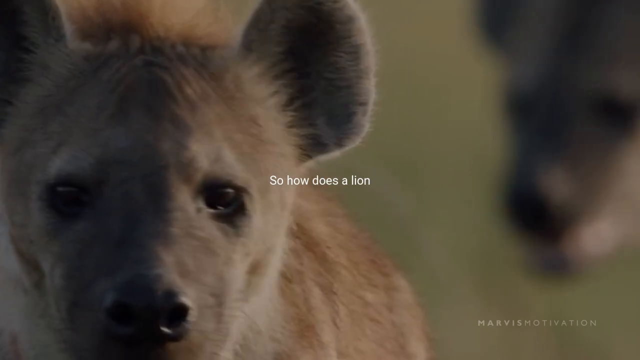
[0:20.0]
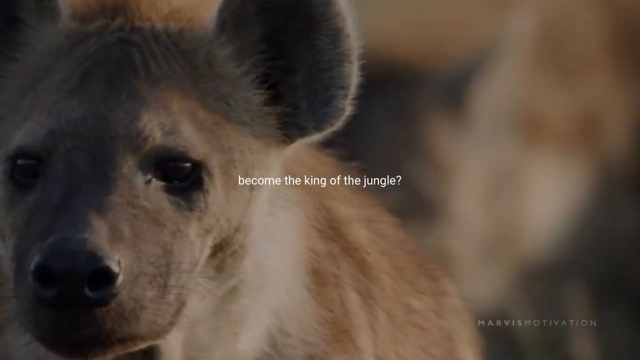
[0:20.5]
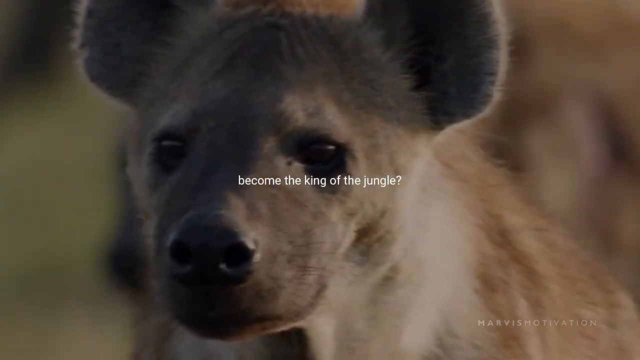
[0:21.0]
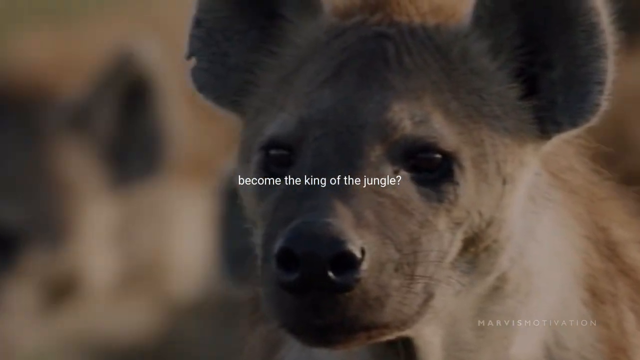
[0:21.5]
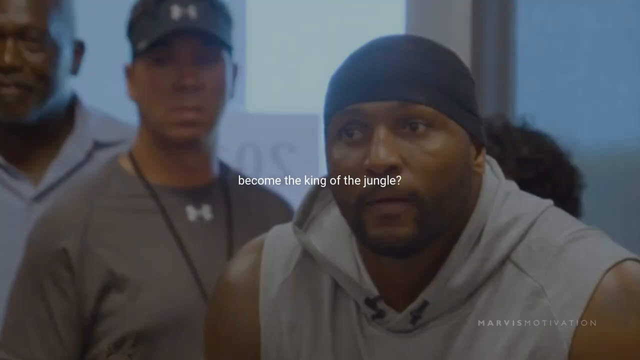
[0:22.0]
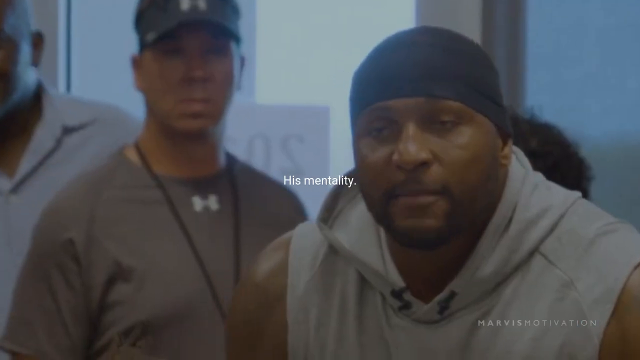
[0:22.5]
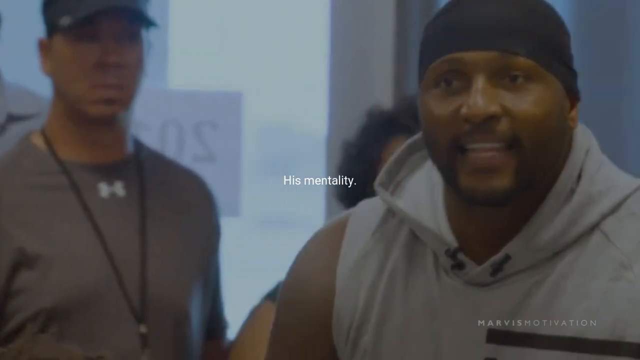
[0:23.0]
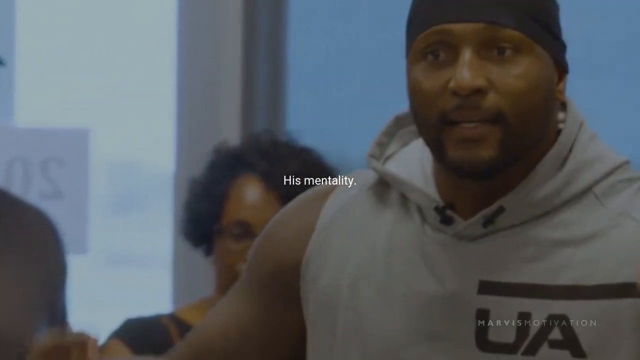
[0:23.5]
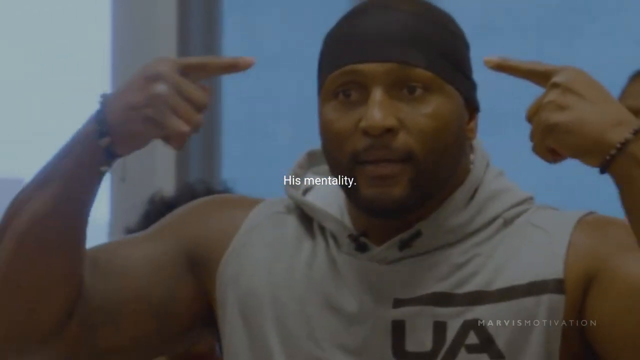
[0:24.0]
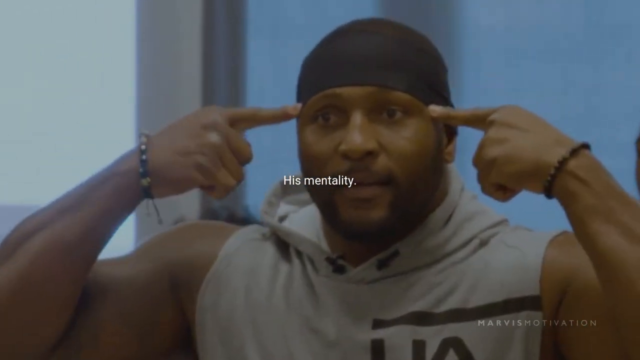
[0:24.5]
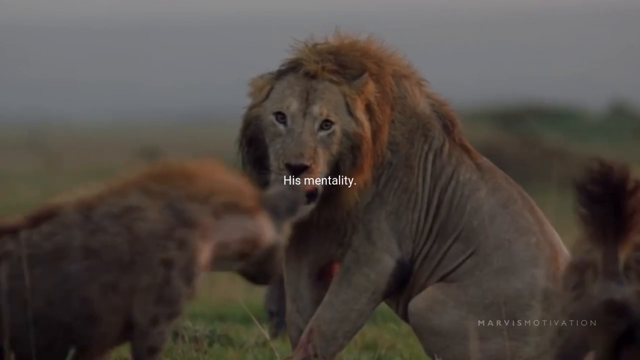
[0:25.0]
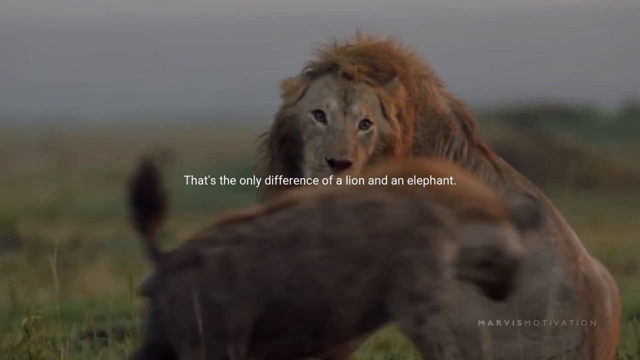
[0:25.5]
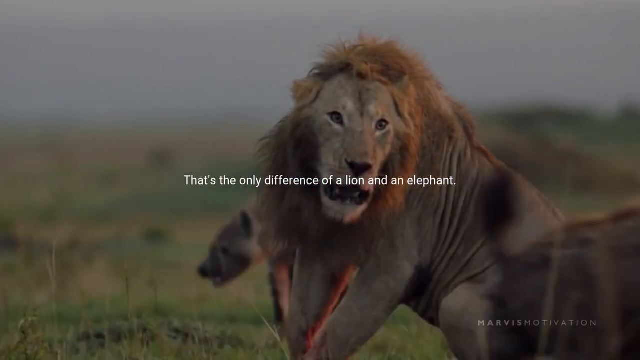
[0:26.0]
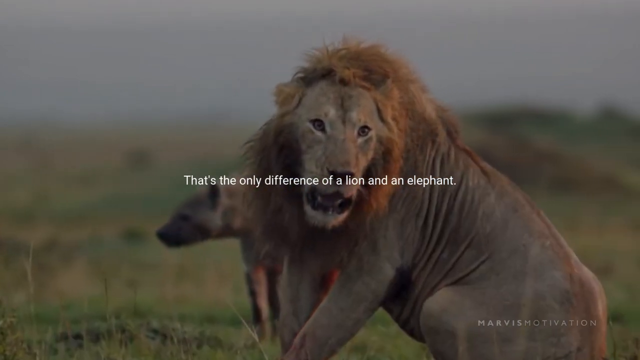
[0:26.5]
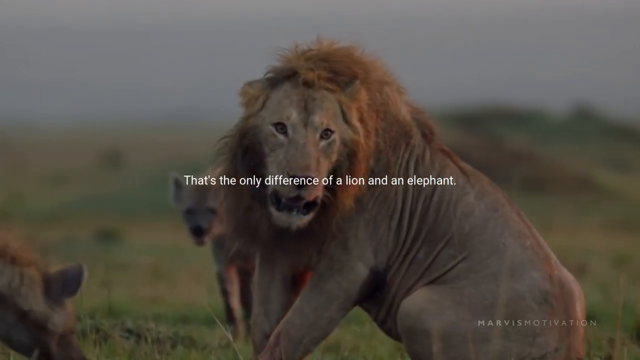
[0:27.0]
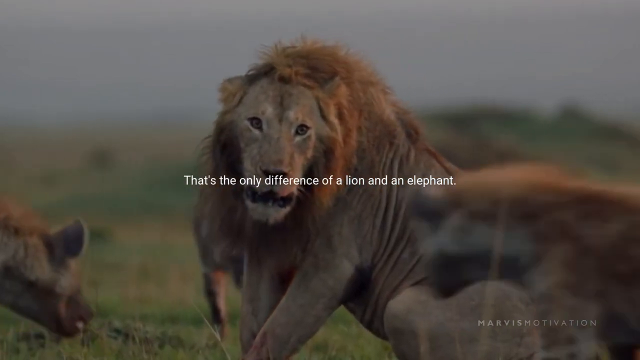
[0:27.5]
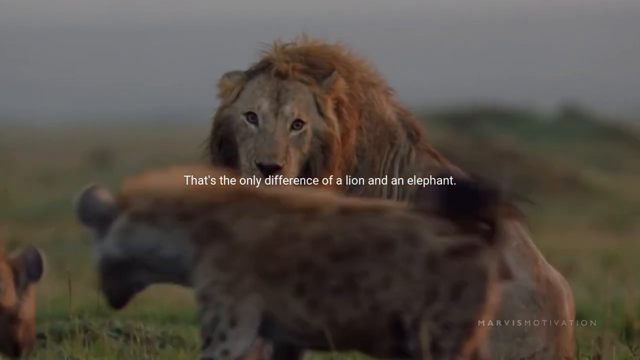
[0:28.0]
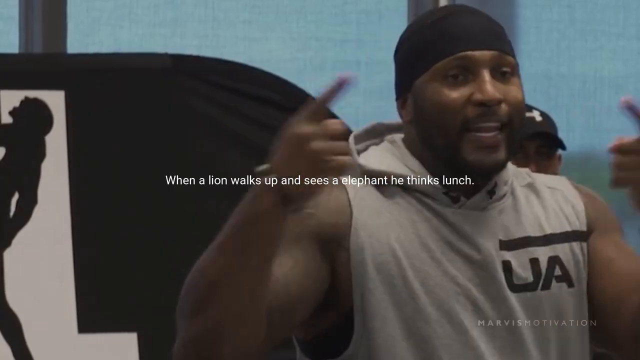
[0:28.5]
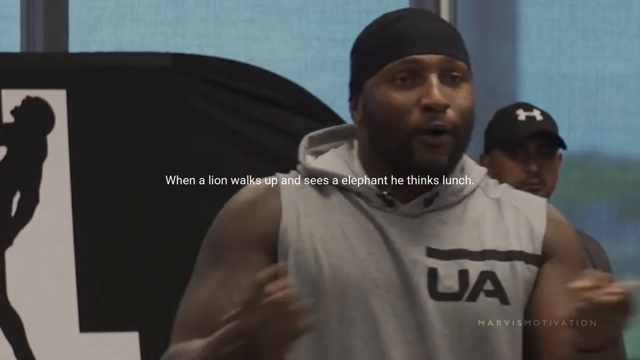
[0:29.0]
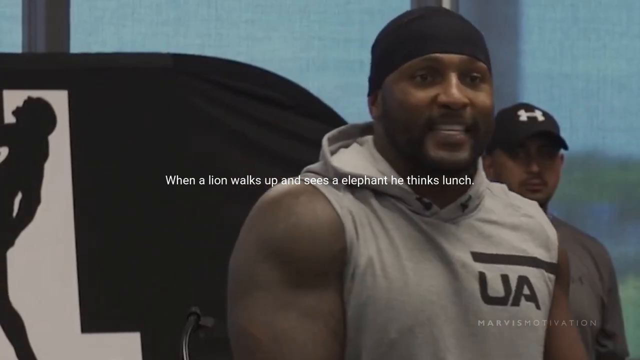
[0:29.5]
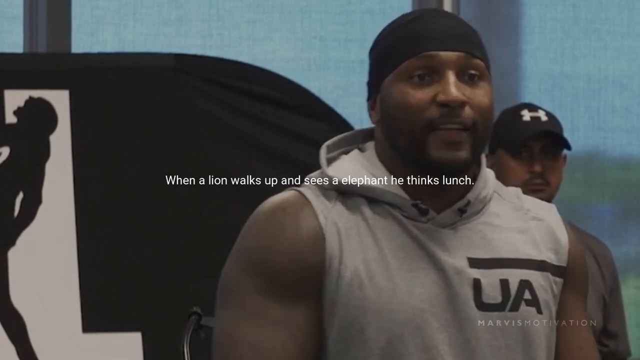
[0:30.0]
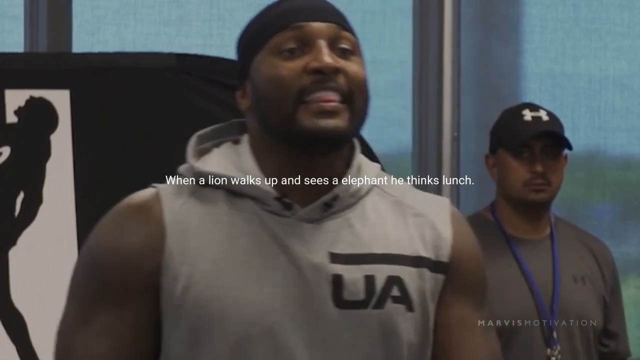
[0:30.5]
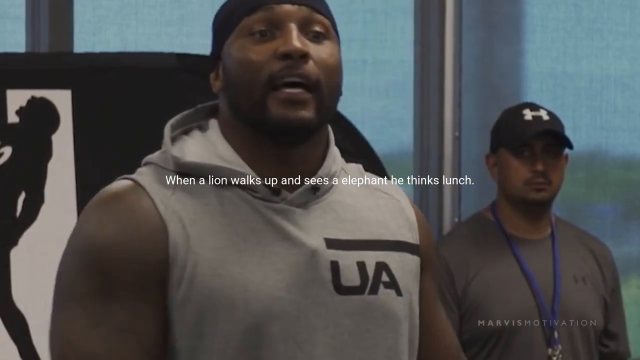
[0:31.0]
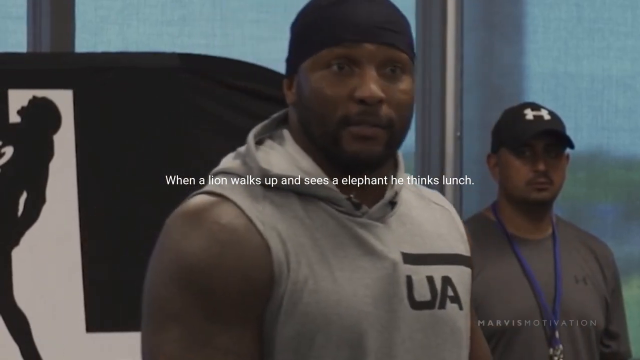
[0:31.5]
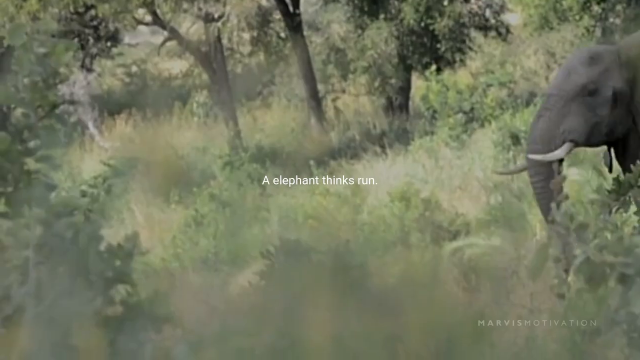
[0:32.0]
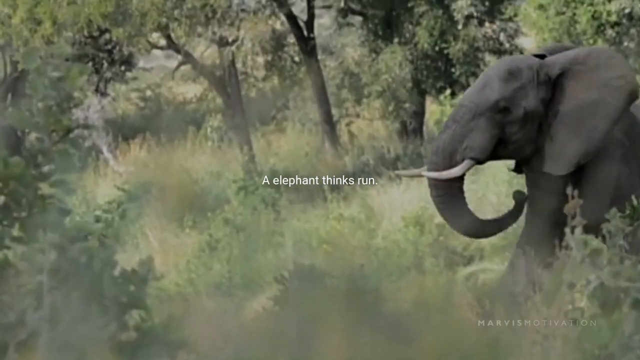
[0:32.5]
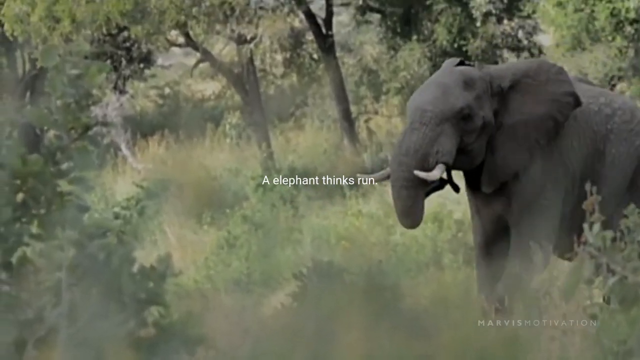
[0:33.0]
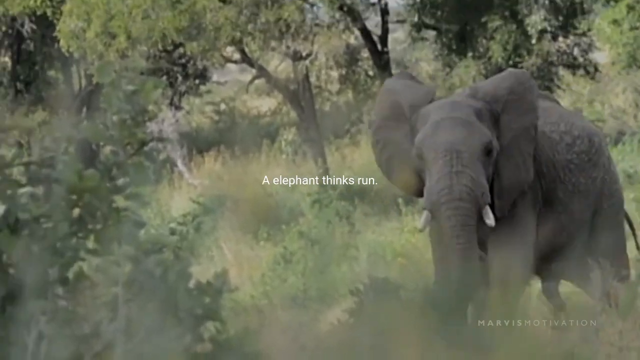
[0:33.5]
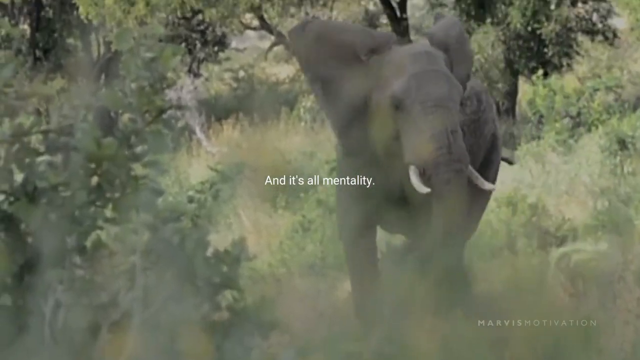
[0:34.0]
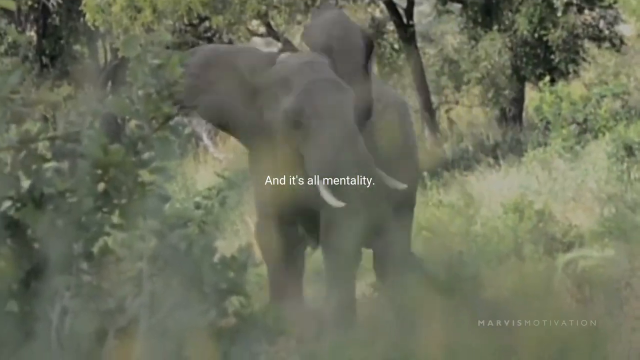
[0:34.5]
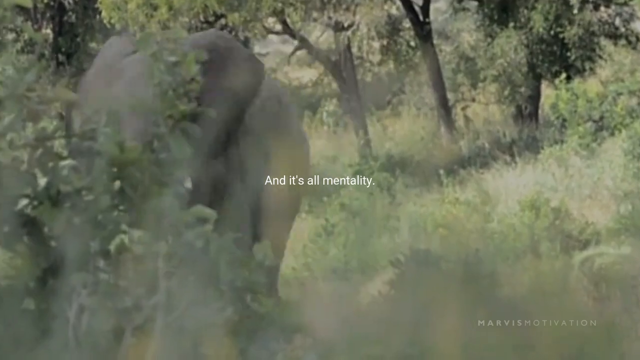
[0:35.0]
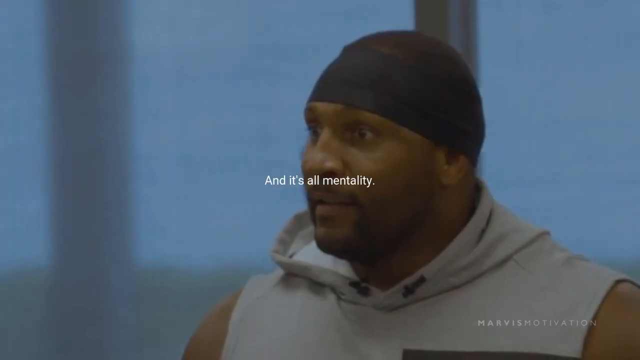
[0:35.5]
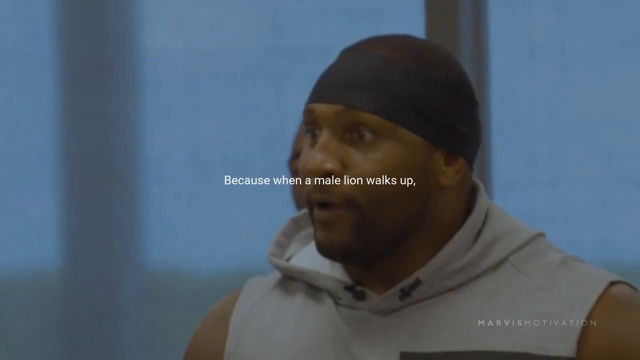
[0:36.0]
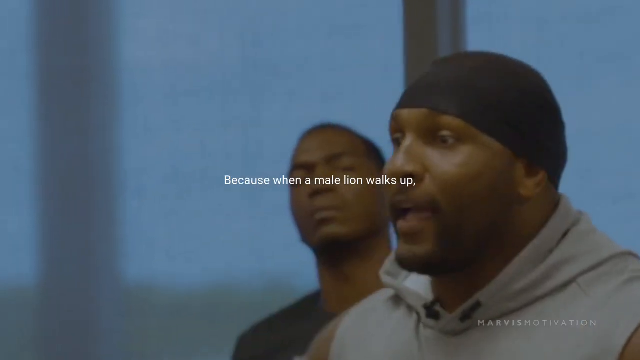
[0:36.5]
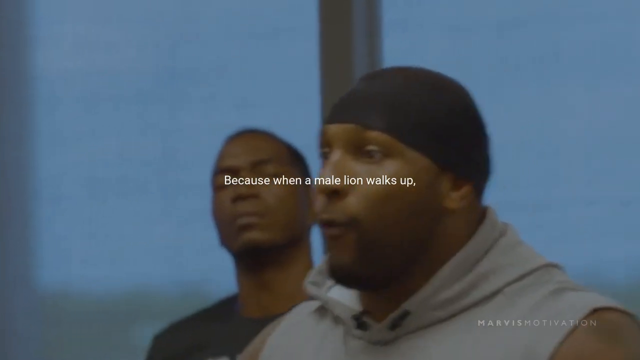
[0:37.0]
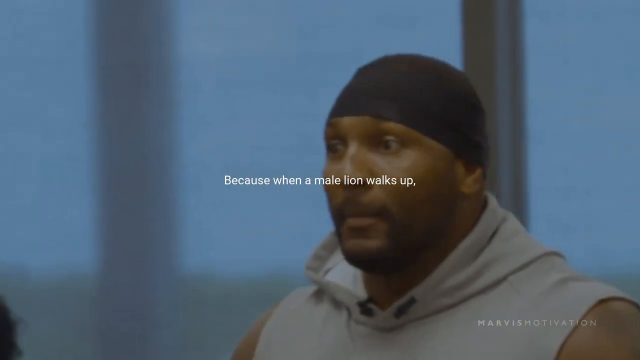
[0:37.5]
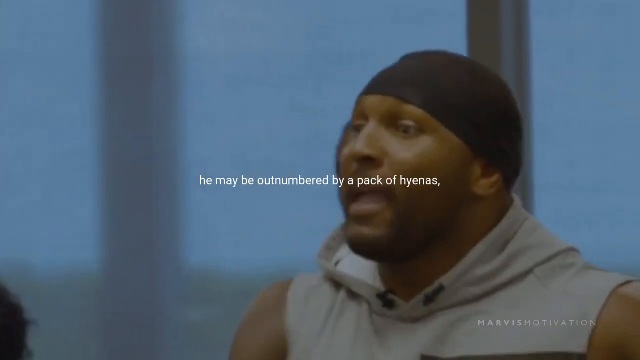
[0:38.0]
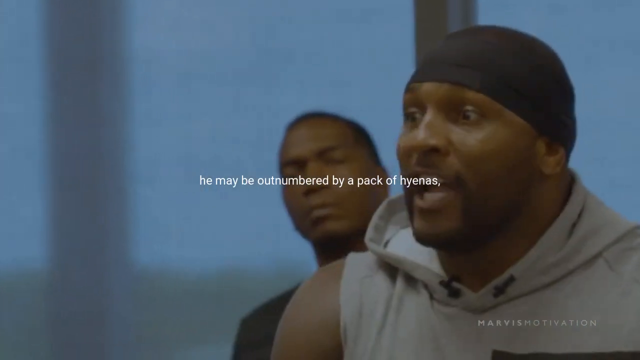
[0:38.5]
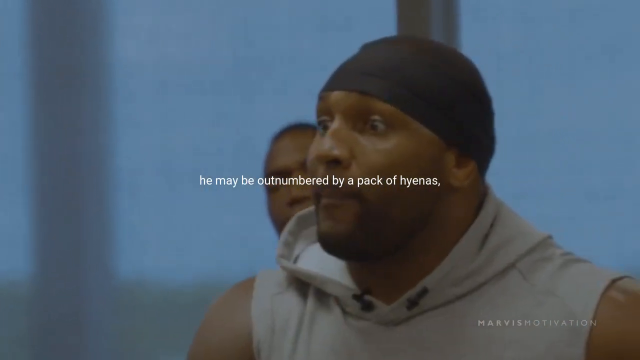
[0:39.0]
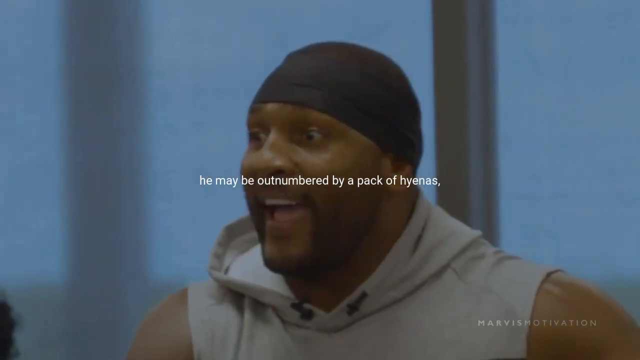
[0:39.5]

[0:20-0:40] Two hyenas appear in the background with white text that reads "become the king of the jungle." The video then shows black, very built male individuals in what may be a navy or gym-type environment. Text reading "his mentality" appears, followed by text such as "that's the only difference of a lion and an elephant," "It's all mentality" and "because when a male lion walks up, he may be outnumbered by a pack of hyenas. But this male lion."